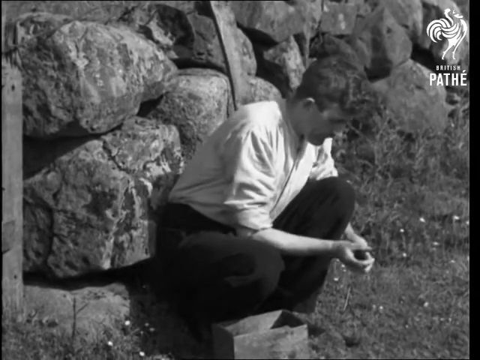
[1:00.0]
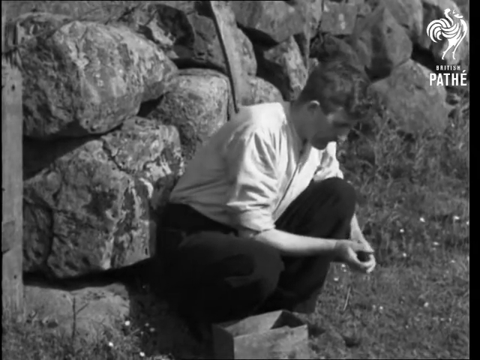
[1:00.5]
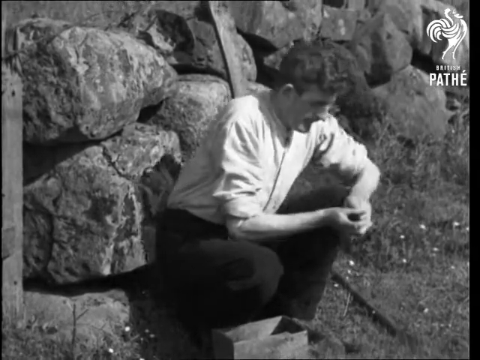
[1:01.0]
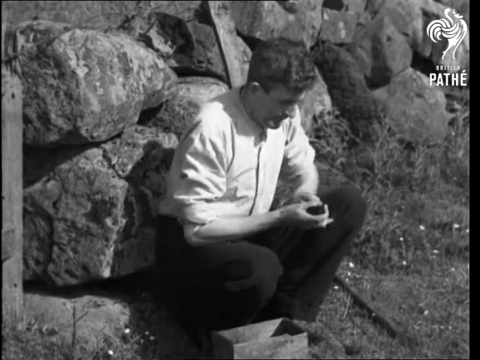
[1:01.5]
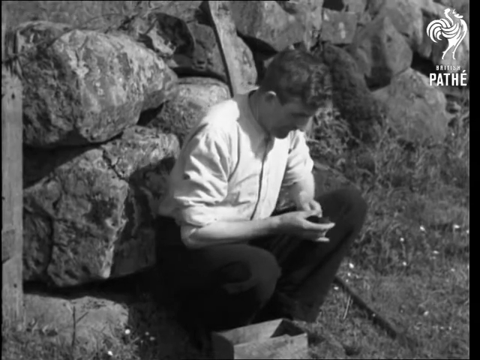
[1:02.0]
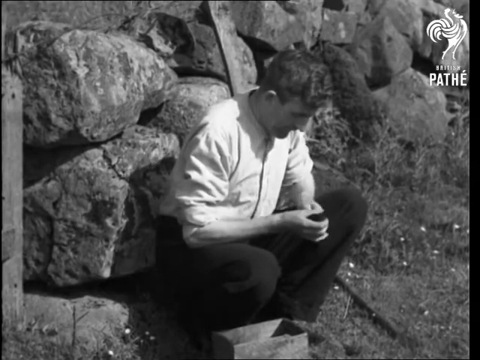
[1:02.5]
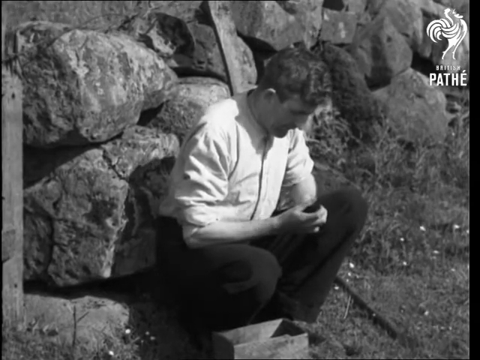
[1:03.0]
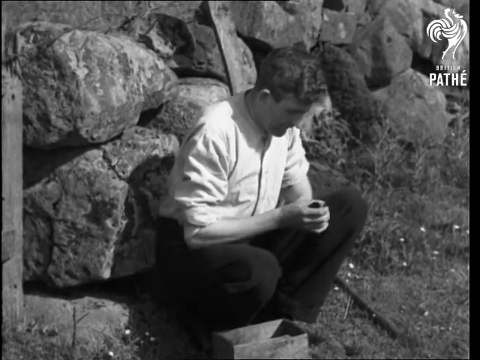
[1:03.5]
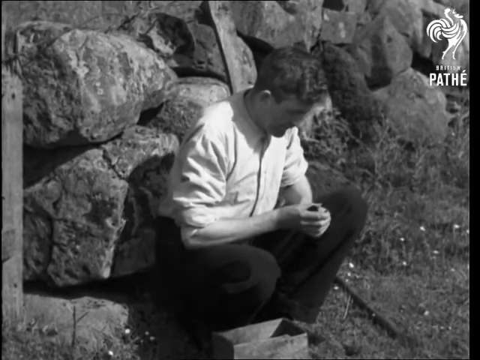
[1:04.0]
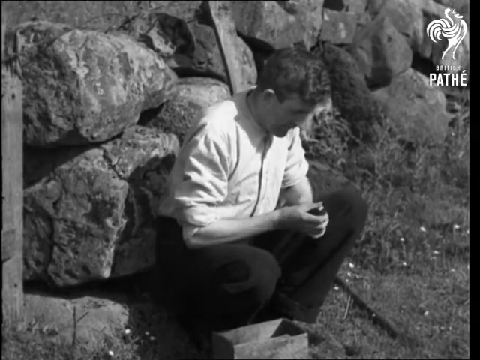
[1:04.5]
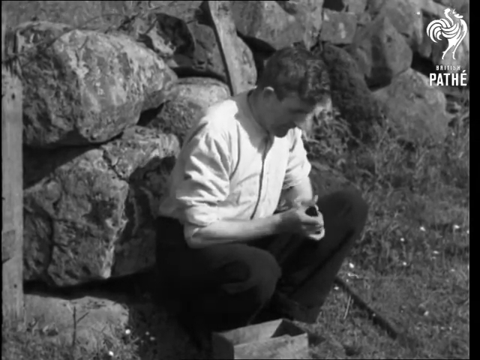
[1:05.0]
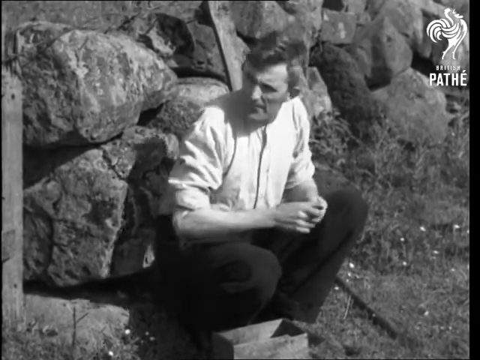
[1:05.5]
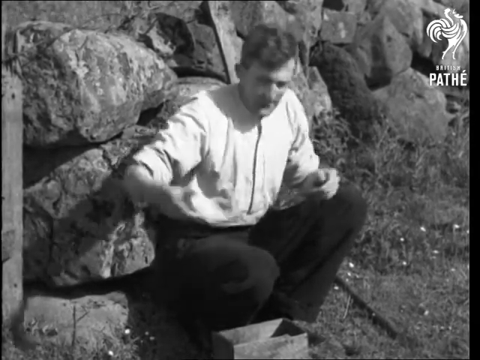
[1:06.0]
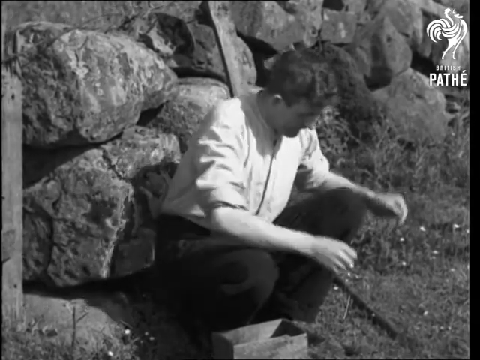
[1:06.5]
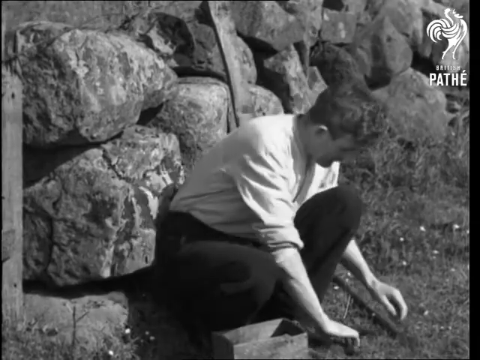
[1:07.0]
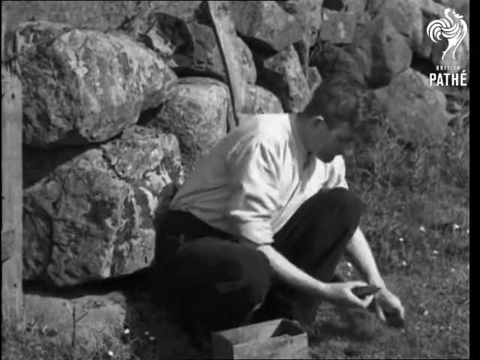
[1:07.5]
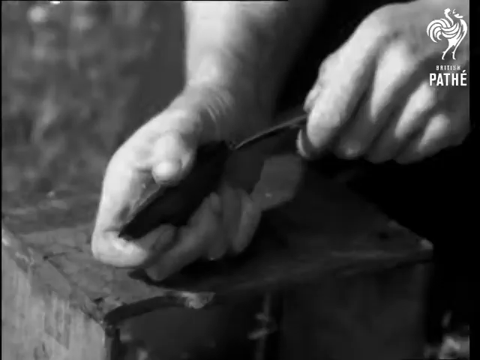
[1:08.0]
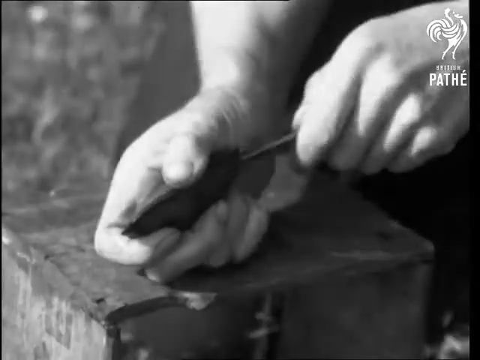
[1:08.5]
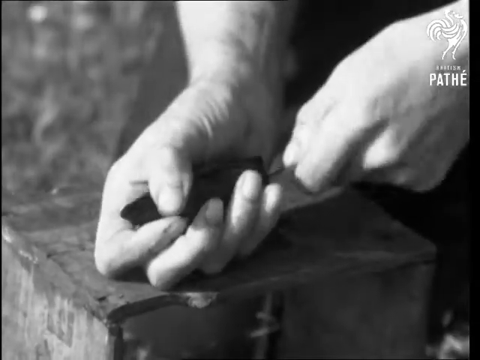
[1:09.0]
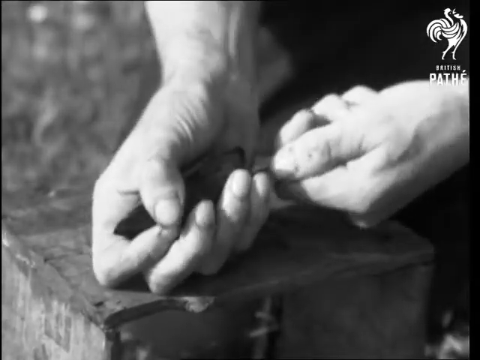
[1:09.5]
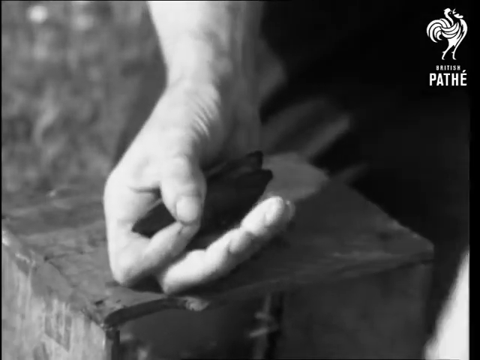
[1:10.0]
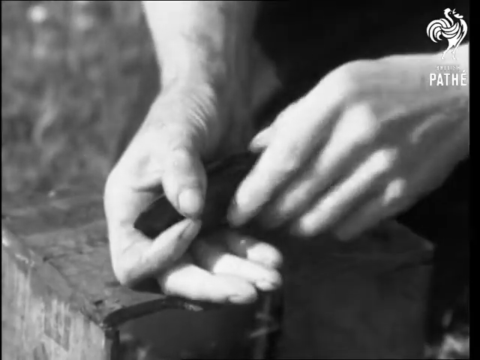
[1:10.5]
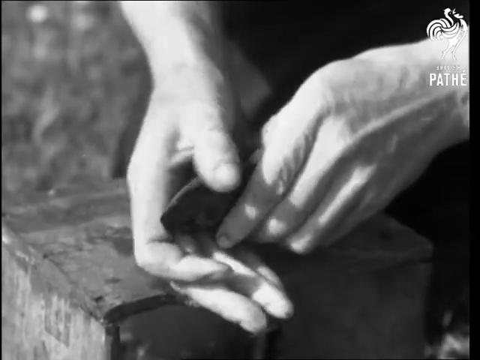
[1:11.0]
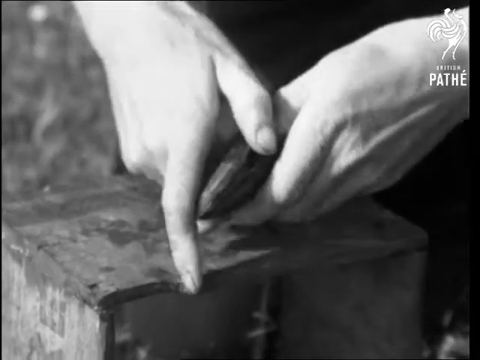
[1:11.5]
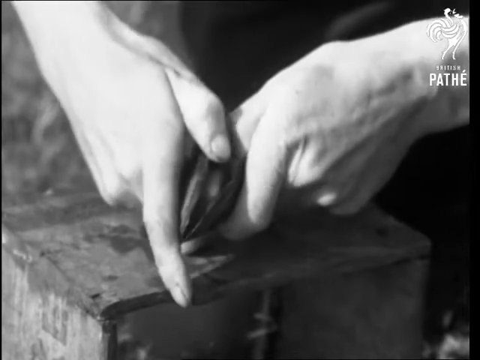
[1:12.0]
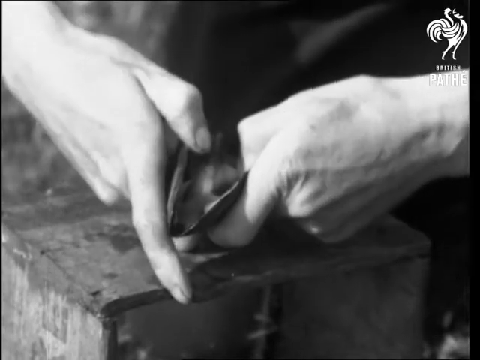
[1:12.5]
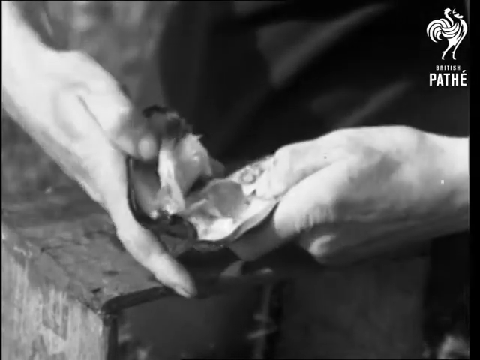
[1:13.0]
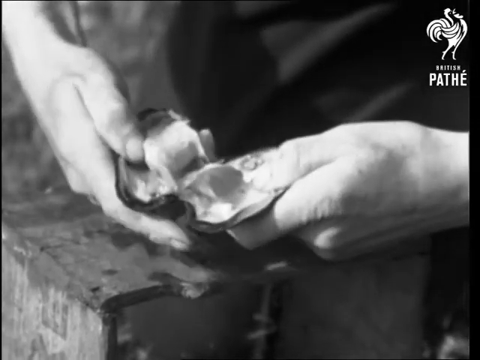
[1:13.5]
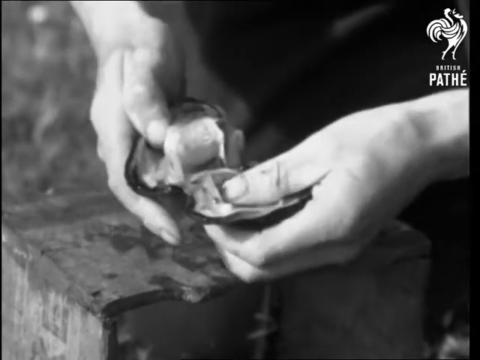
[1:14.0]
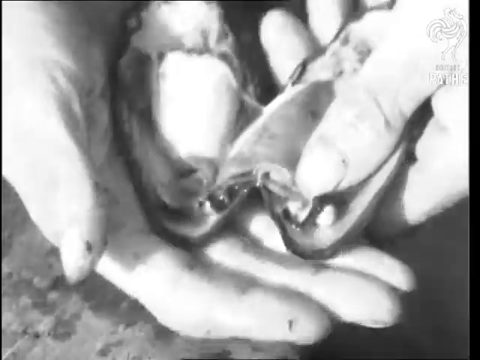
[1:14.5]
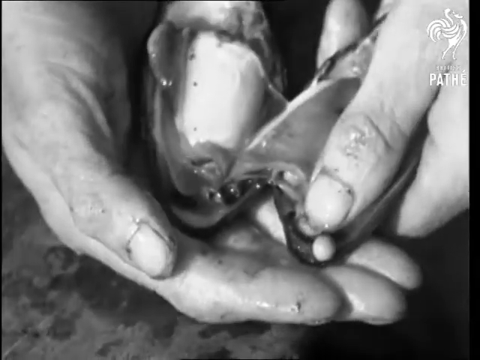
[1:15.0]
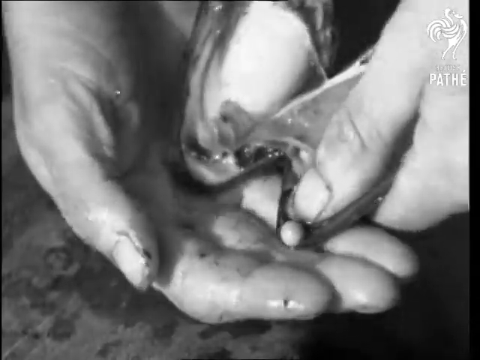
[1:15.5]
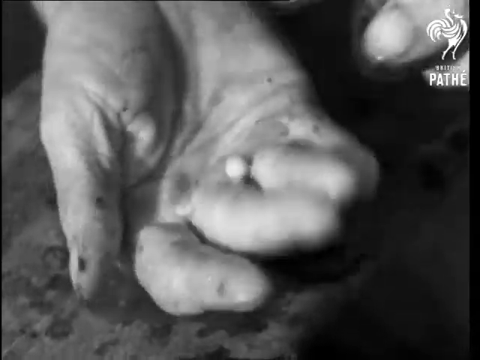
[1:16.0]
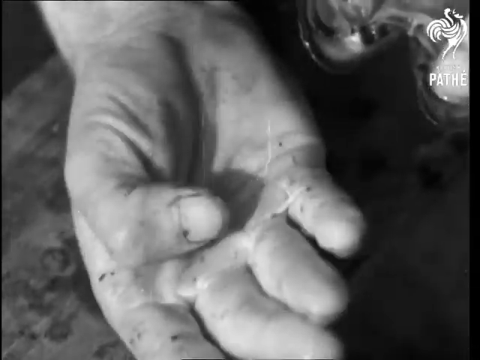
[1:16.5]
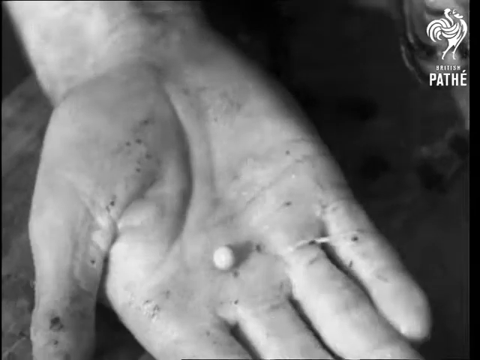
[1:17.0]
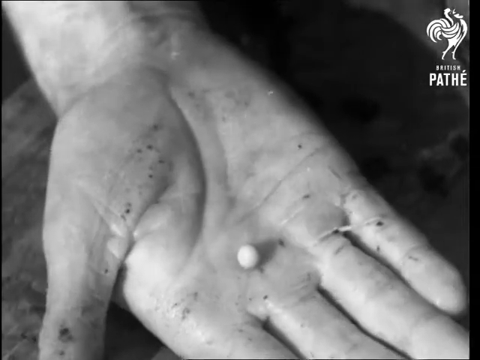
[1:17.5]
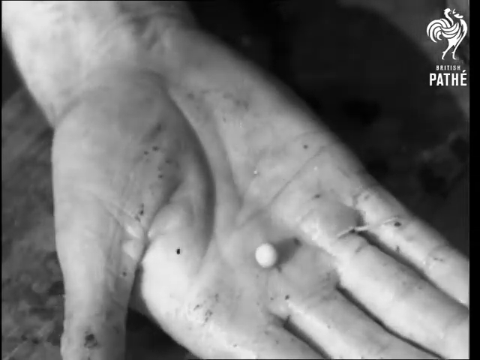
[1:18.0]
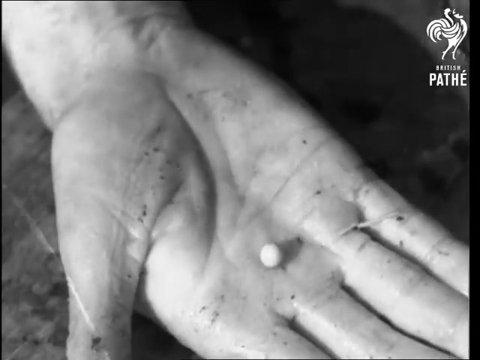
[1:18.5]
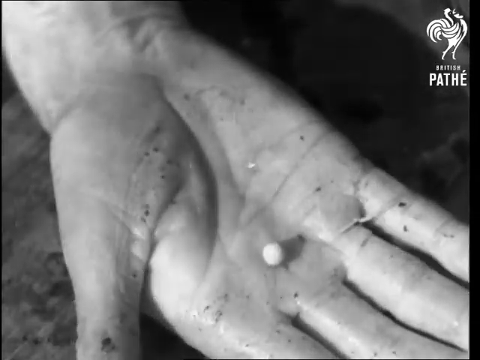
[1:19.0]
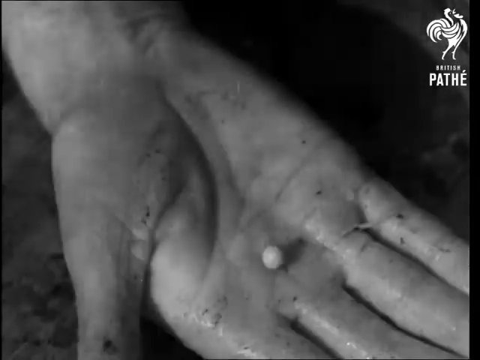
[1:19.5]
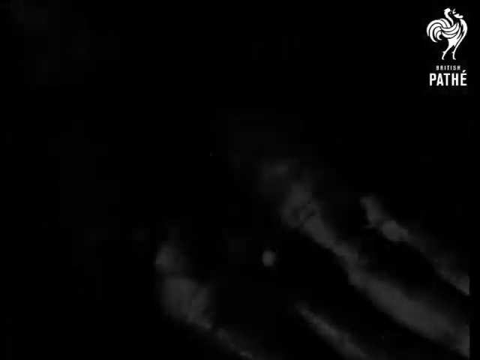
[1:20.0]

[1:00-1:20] The man is on the shore, wearing a white shirt rolled up to his elbows and pants, squatting with a rock wall behind him. He grips the shell or mollusk he grabbed with the tool using two hands, opens the shell, and tosses it off to the right. He then uses a knife to open another one, using the wooden box as his platform. He pries the clam open with his hands and feels around inside for a pearl. He finds one, takes it out, and rolls it around in his palm with his thumb, and the pearl is visible.